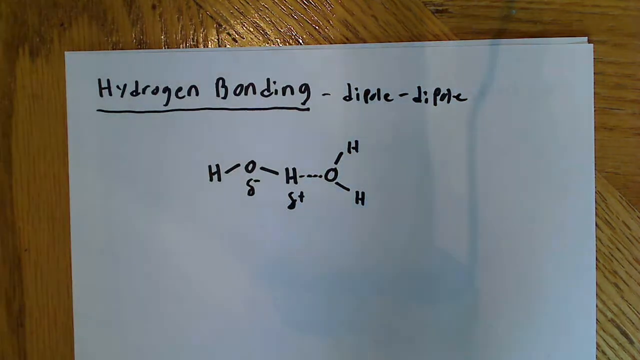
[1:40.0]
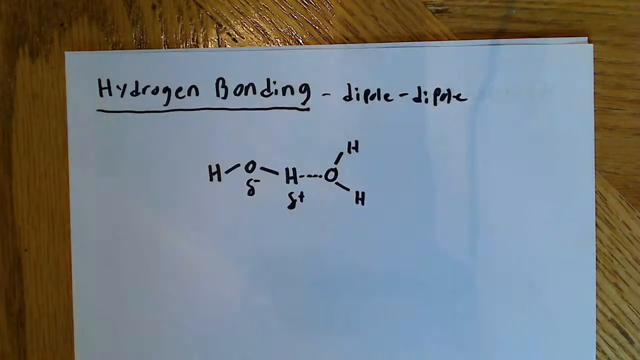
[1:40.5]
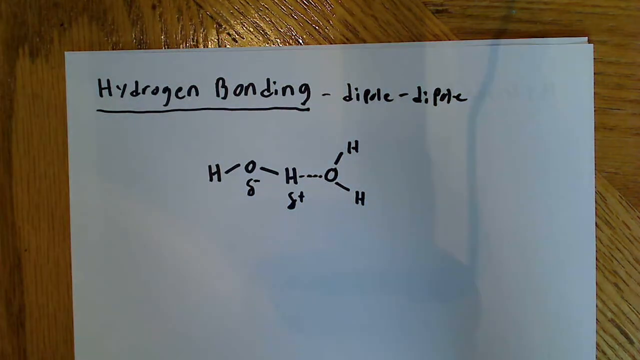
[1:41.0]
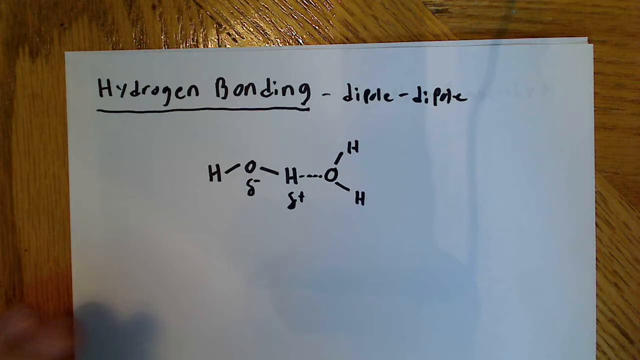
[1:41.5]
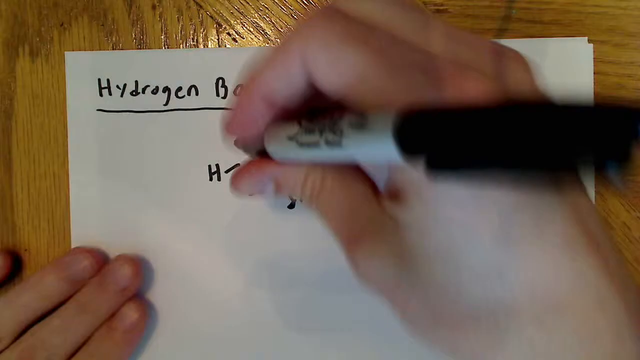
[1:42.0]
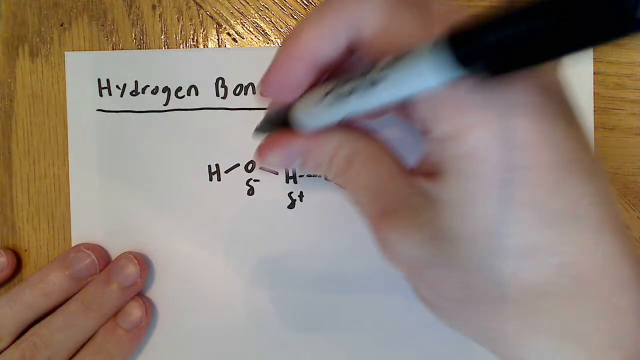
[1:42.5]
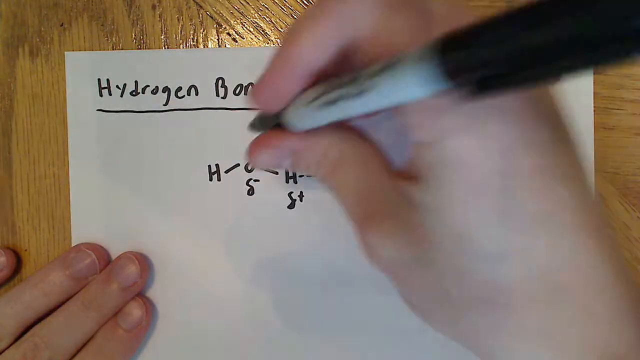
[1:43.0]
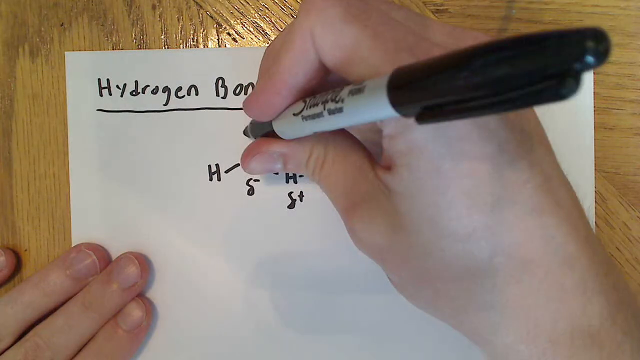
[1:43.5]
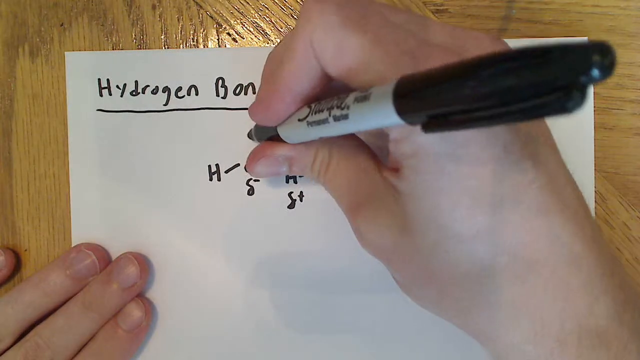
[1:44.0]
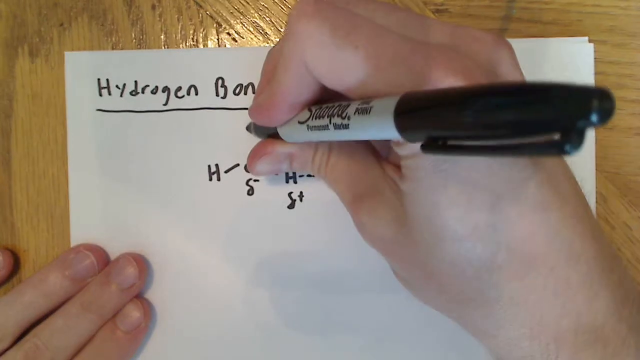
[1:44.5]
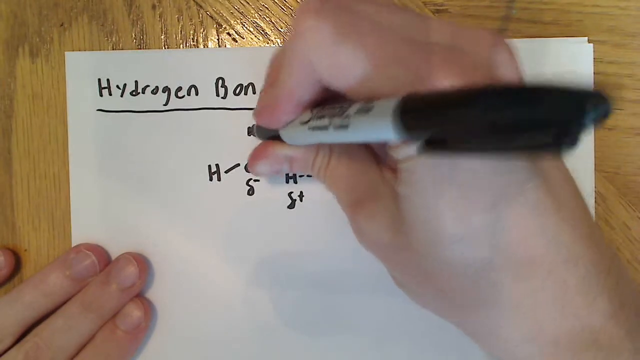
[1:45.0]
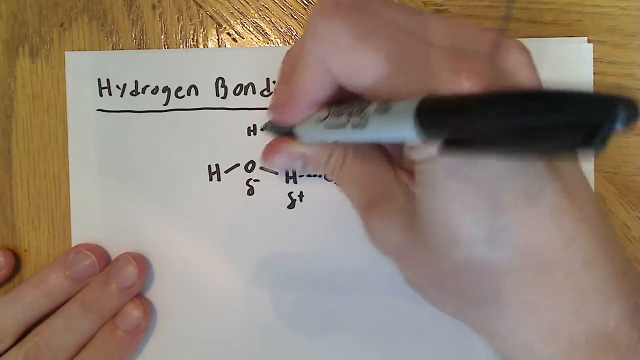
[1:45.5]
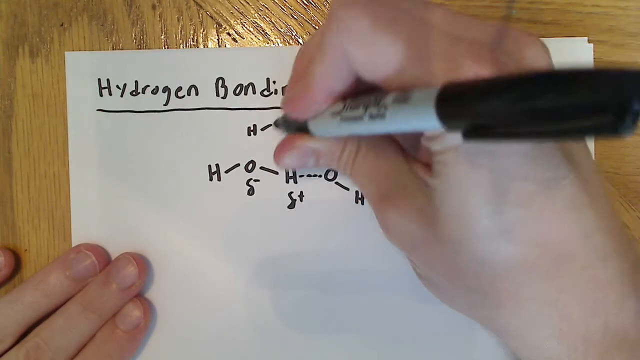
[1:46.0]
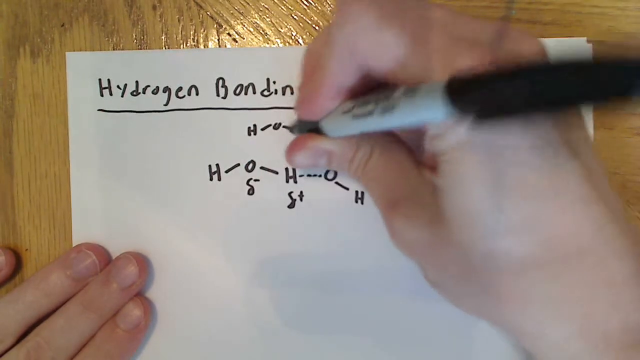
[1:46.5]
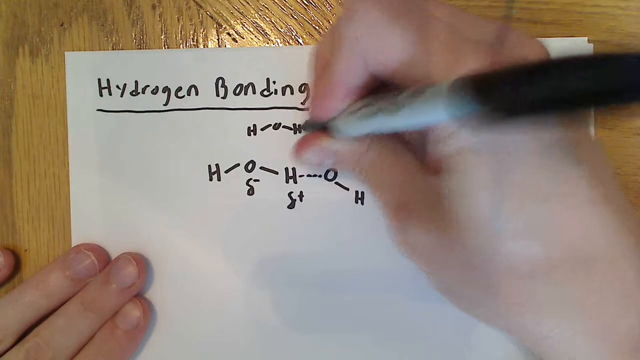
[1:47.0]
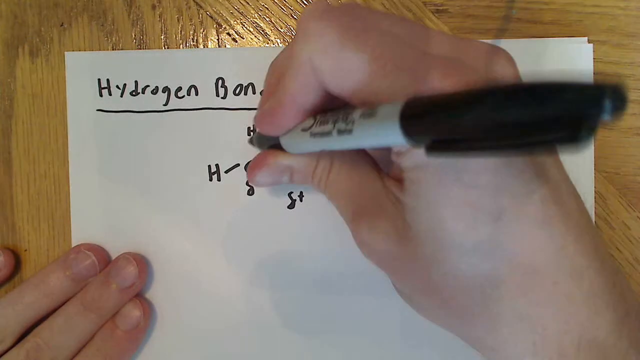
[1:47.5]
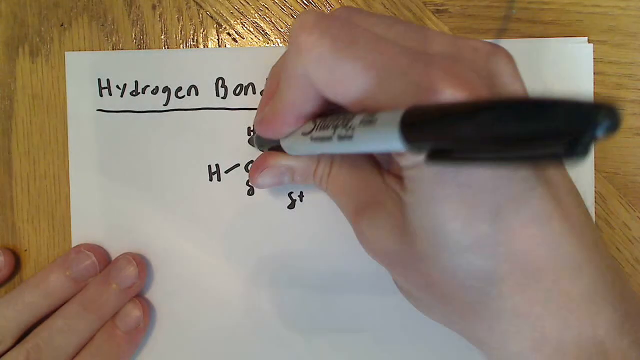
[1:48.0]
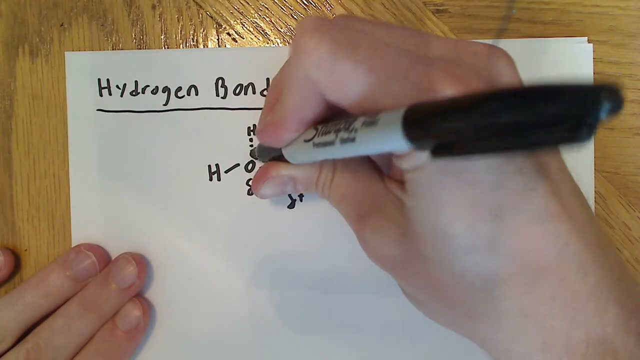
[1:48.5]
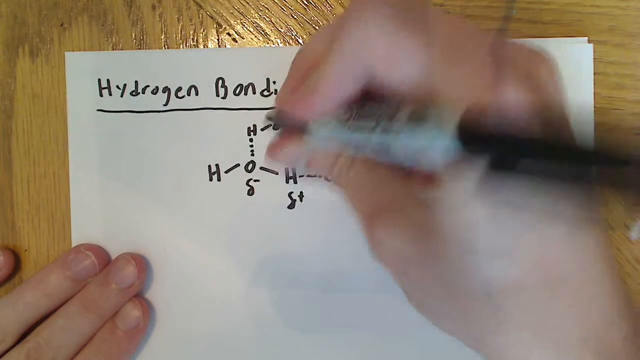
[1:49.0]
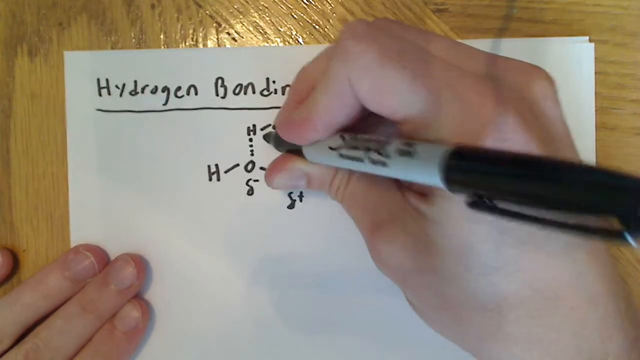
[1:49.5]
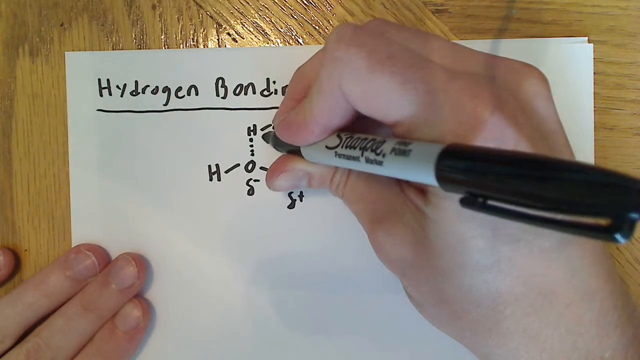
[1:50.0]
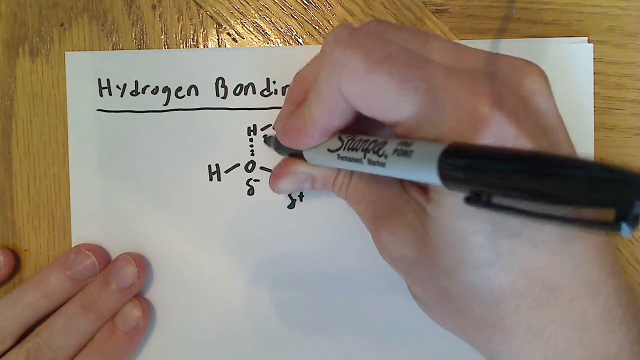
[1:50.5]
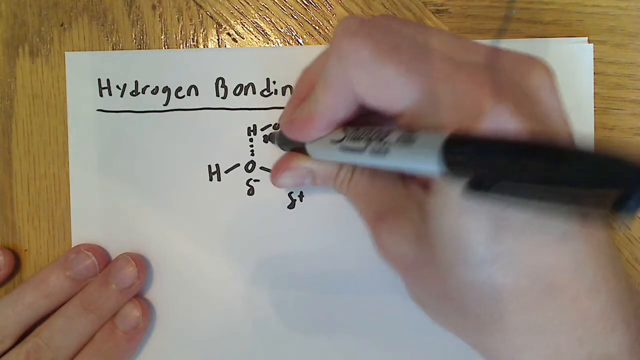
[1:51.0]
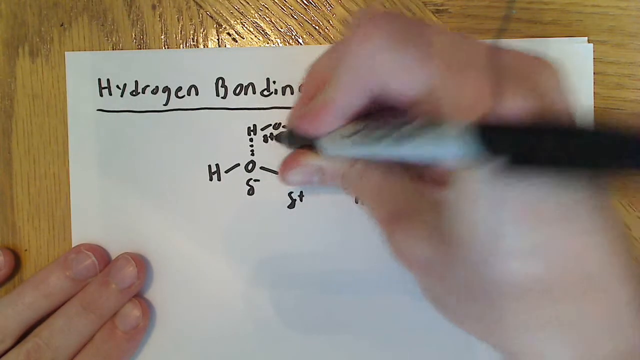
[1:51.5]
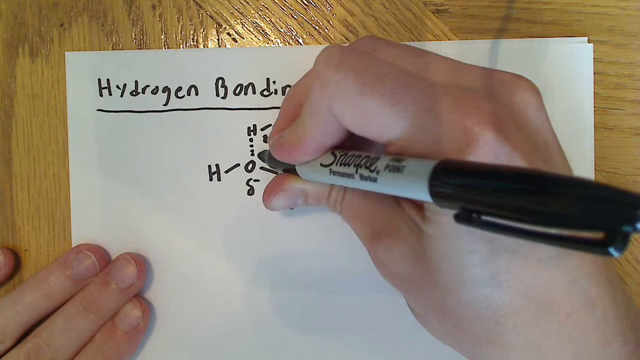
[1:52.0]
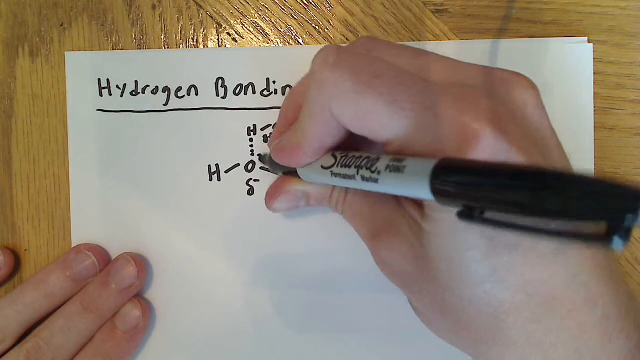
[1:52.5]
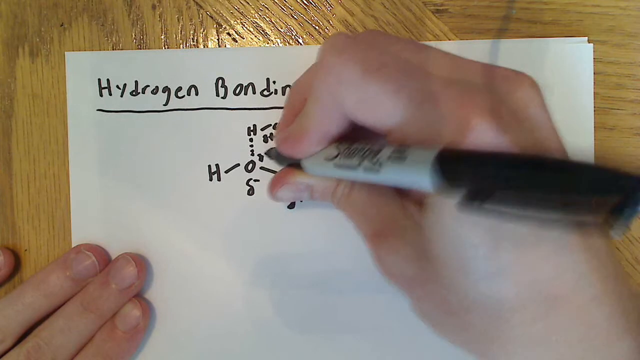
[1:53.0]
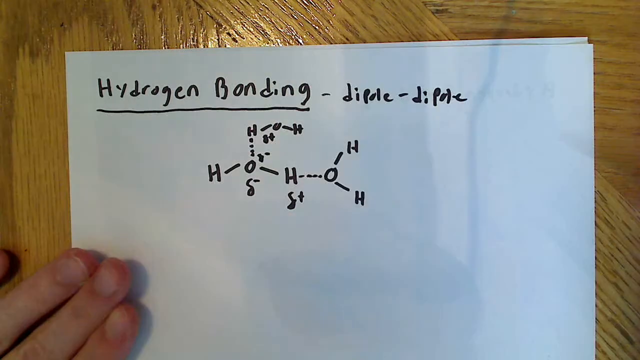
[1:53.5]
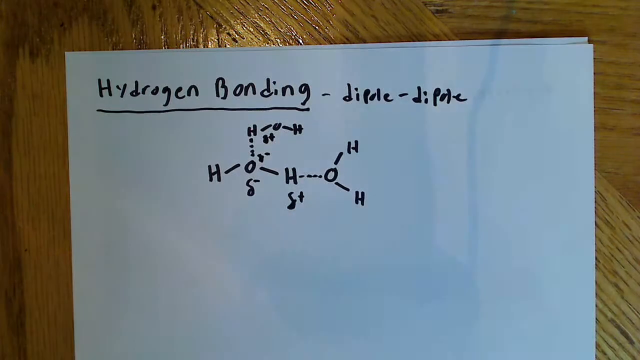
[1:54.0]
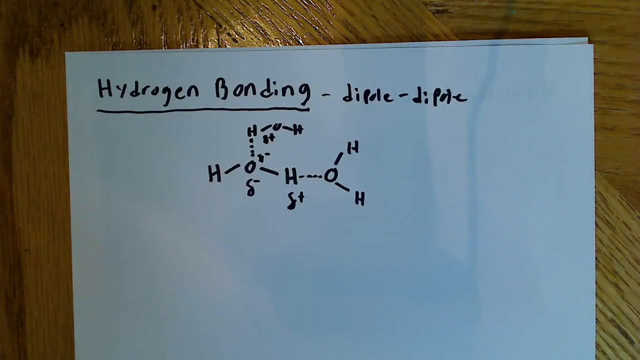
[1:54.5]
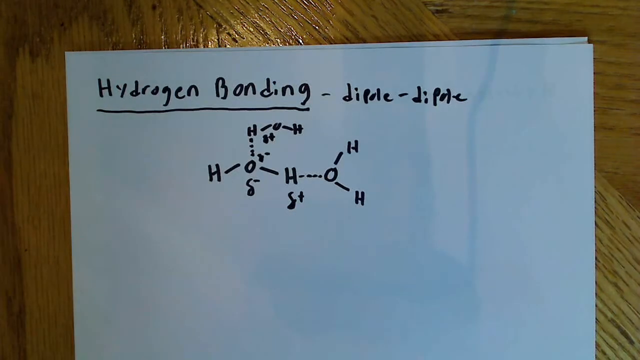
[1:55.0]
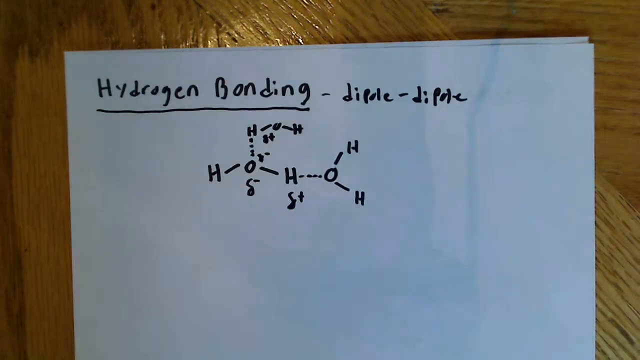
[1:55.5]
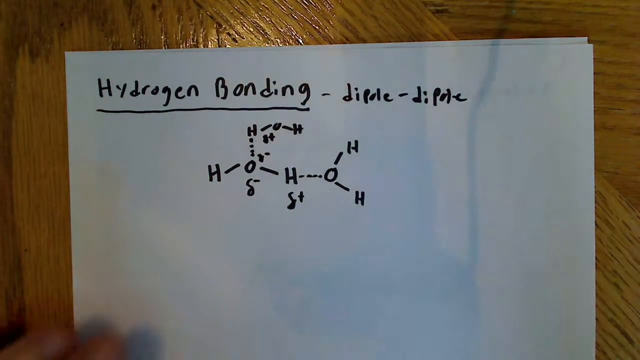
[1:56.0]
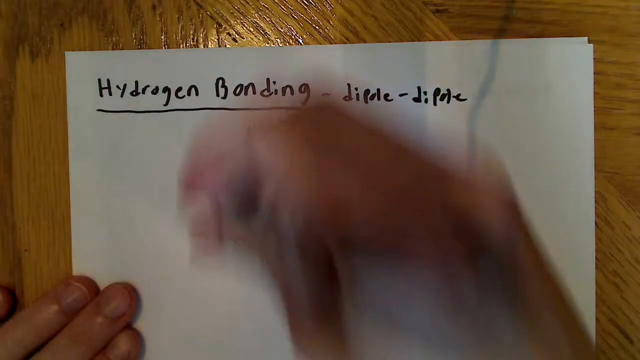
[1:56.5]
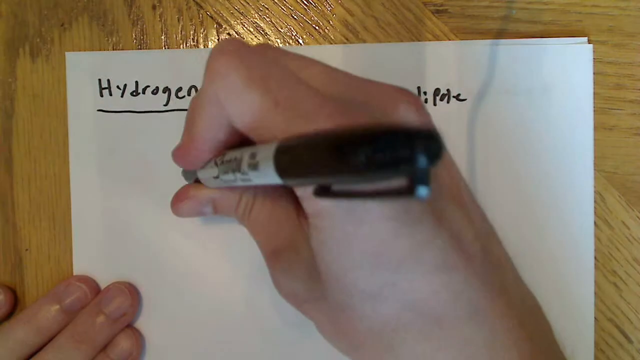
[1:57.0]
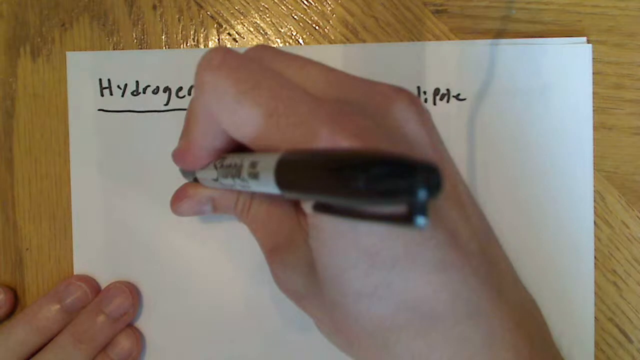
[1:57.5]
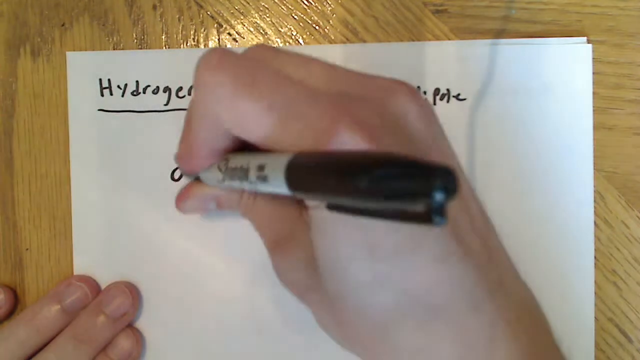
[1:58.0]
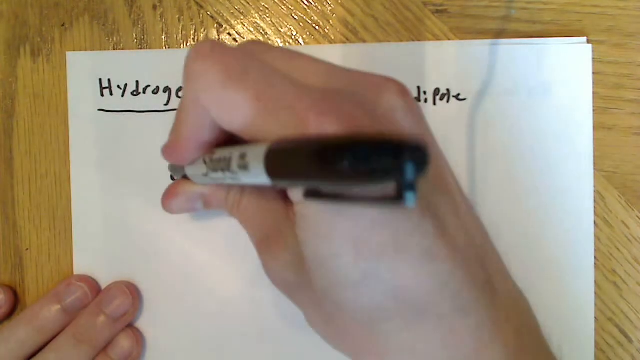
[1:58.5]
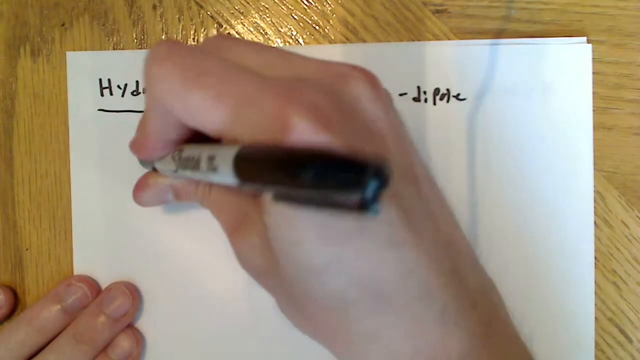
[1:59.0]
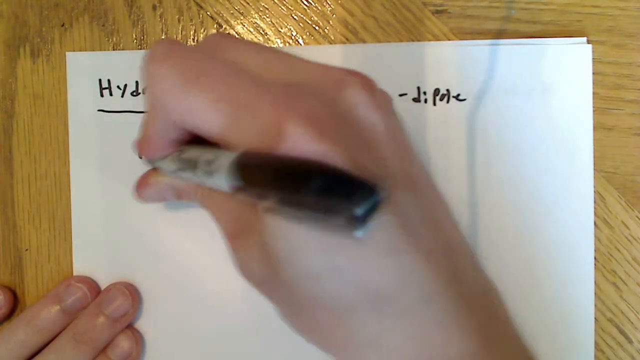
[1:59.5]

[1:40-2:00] Pieces of white printer paper with Sharpie writing on them lie on a brown wooden table. Two hands of a white person with short fingernails reach into the frame; the left hand holds down the paper and the right holds a Sharpie marker. At the top left, "hydrogen bonding" is written with the H and B capitalized and the rest lowercase, underlined, though at first only "hydrogen bon" is visible. Beneath it is a diagram with Hs and Os, Greek deltas, and minuses and pluses, but at the beginning the right hand covers most of the writing. Between "bonding" and the existing diagram, the hand with the Sharpie draws another diagram with Hs and Os and a dotted line: an H, a slight dash going up and to the right, and a dotted line between that H and the O in the existing diagram. It then draws some indistinct letters beneath that H with pluses and minuses next to them, possibly Greek lowercase deltas like those elsewhere in the diagram. The hand continues drawing diagrams. Both hands leave the frame, then reenter, and the right hand draws another diagram on the far left with Hs, Os and dashes.